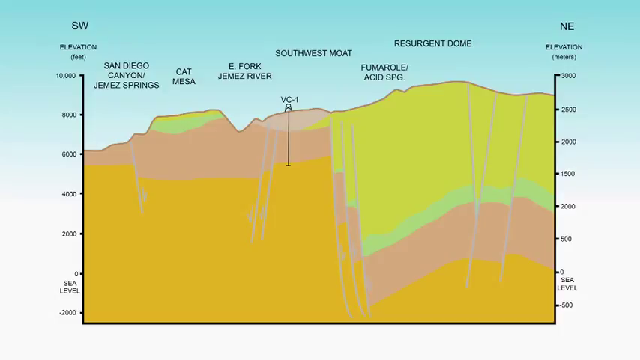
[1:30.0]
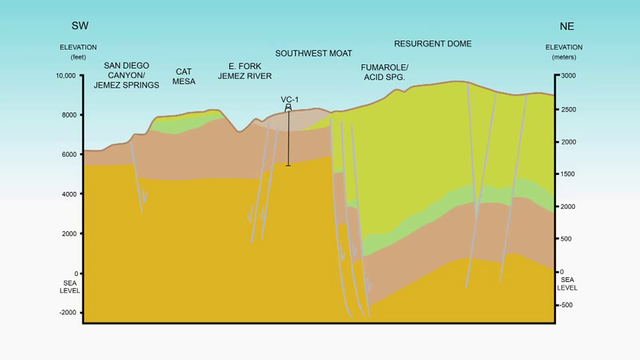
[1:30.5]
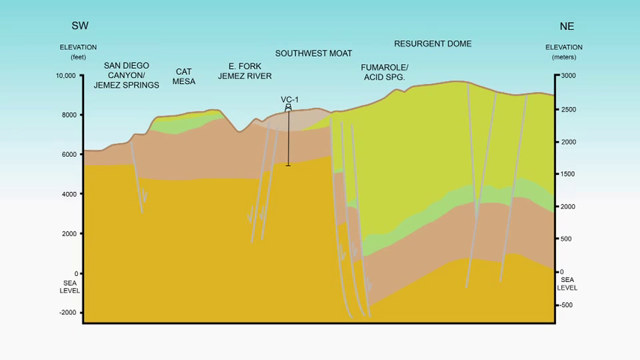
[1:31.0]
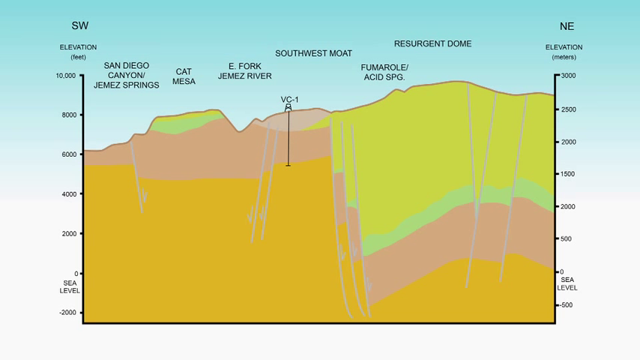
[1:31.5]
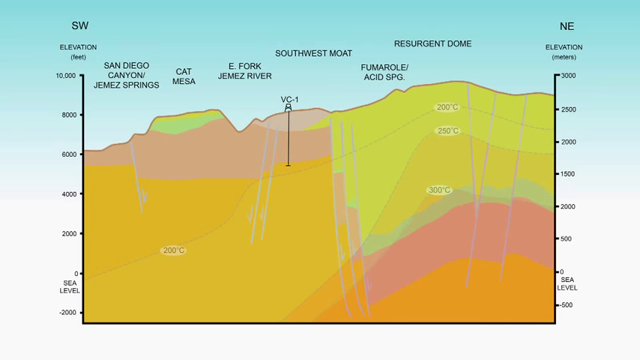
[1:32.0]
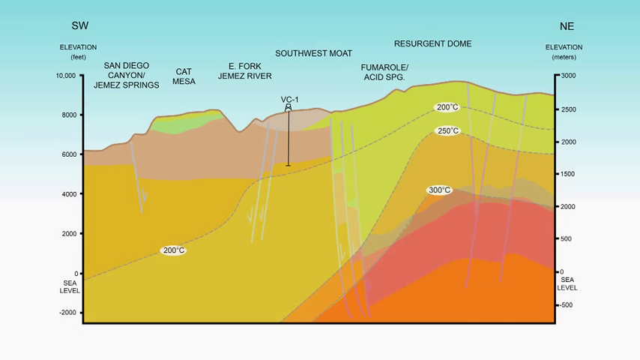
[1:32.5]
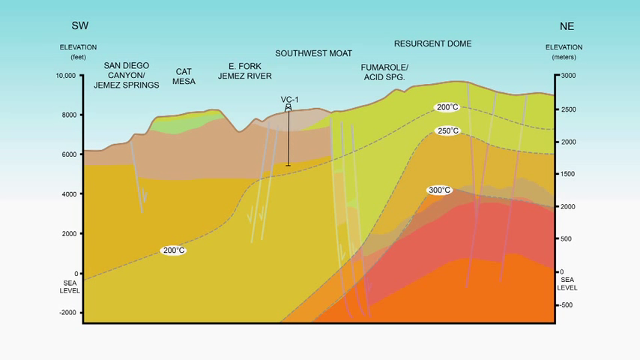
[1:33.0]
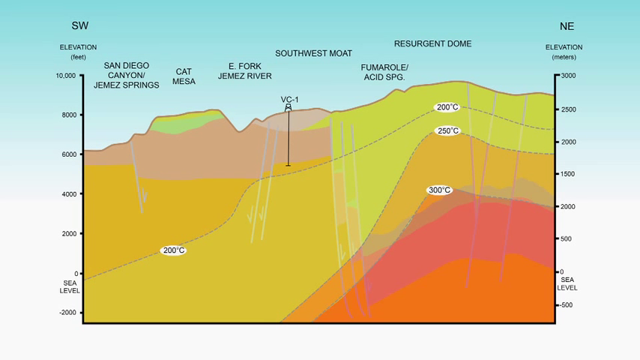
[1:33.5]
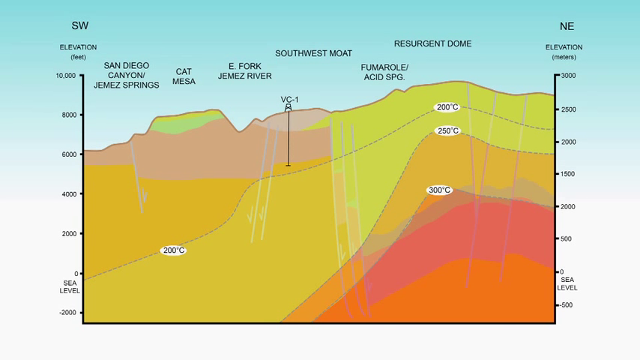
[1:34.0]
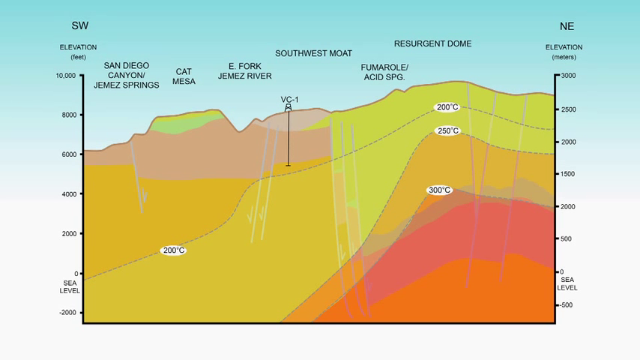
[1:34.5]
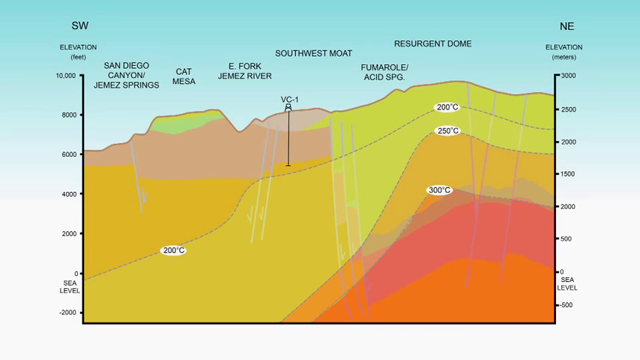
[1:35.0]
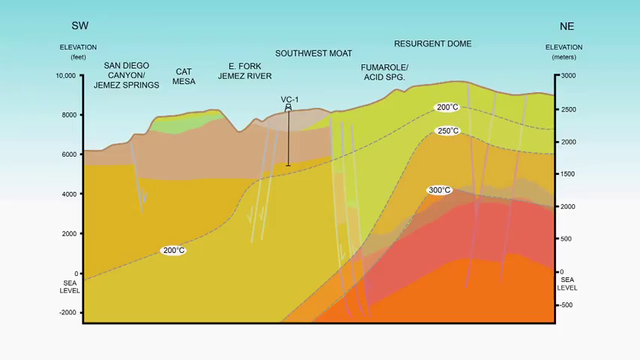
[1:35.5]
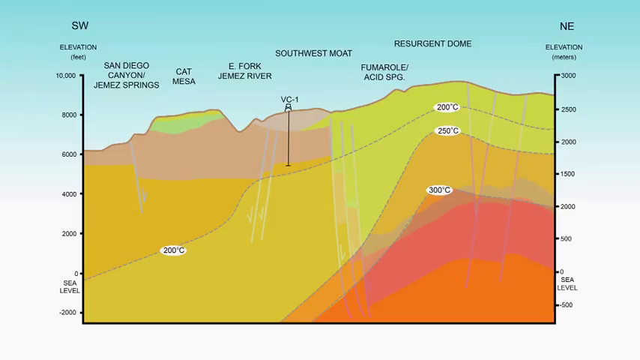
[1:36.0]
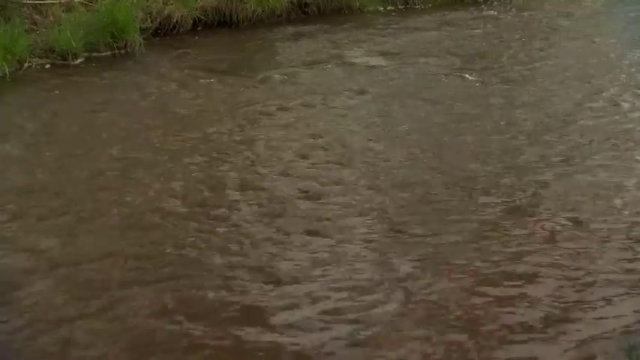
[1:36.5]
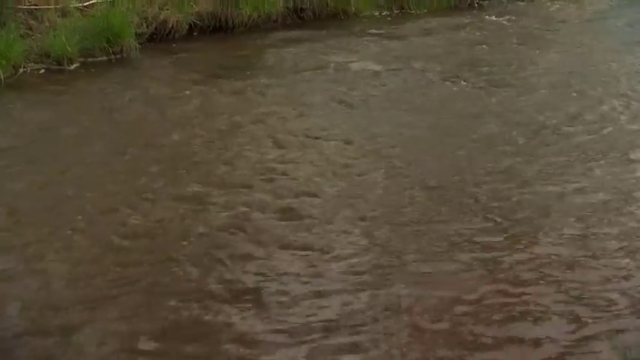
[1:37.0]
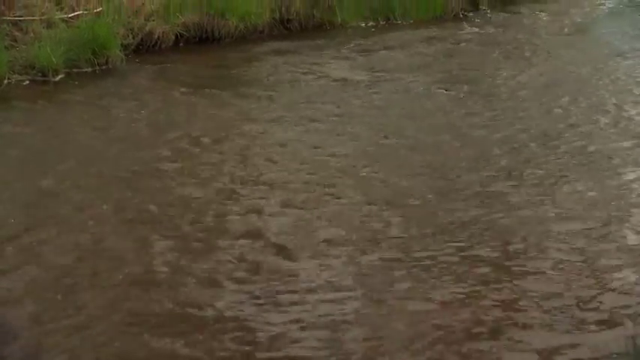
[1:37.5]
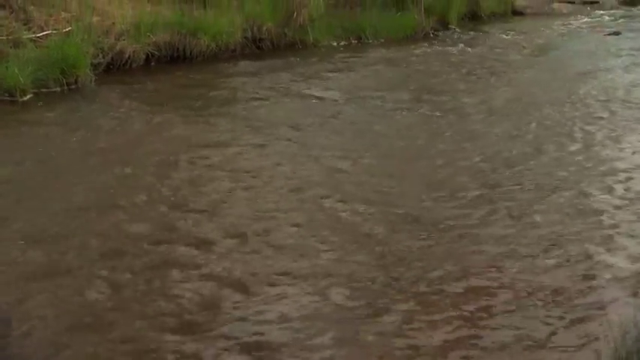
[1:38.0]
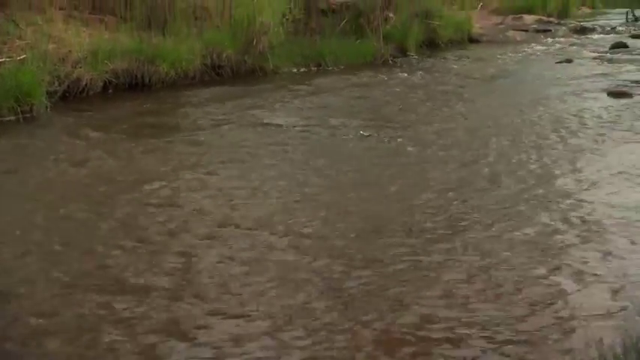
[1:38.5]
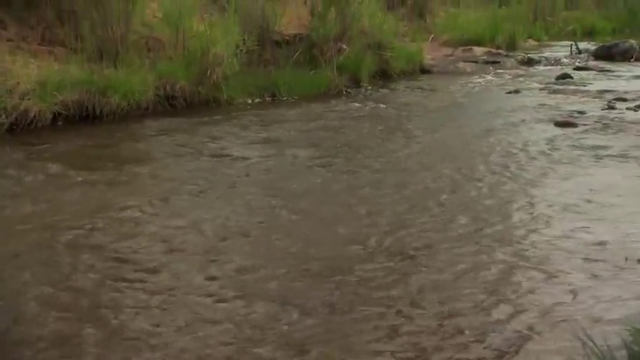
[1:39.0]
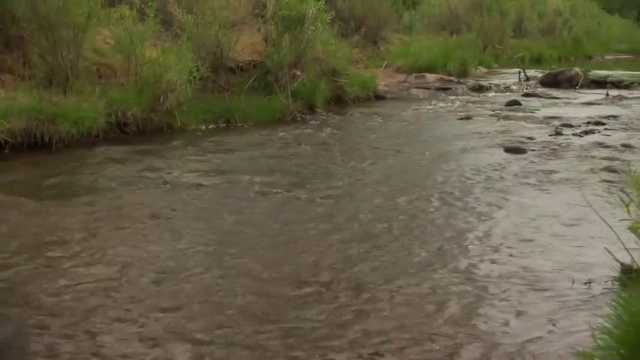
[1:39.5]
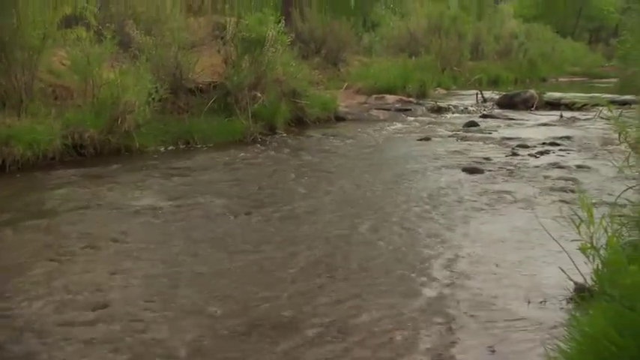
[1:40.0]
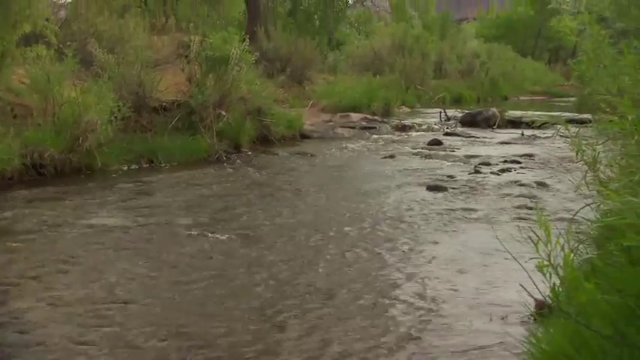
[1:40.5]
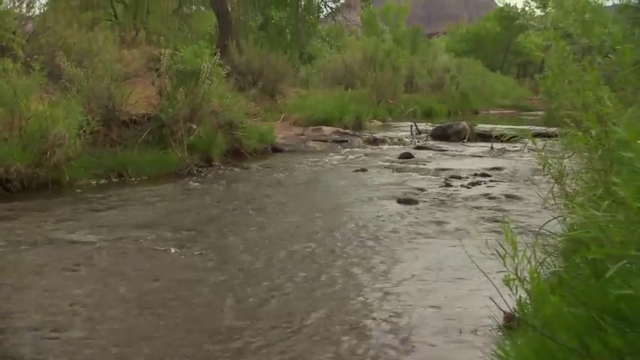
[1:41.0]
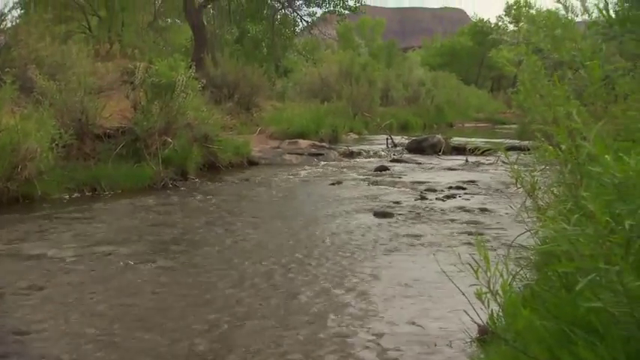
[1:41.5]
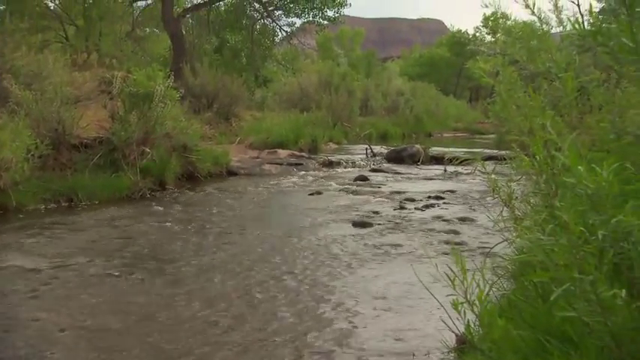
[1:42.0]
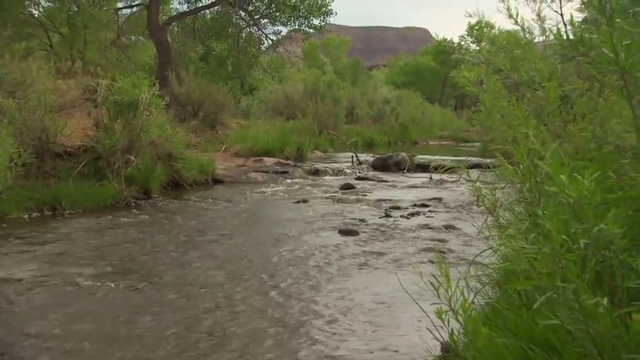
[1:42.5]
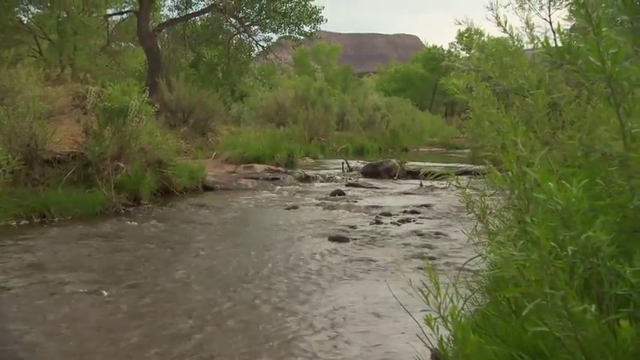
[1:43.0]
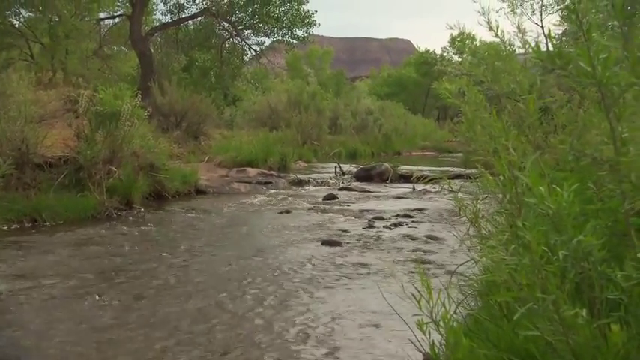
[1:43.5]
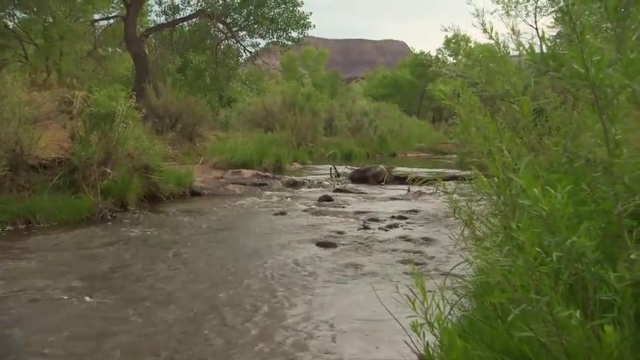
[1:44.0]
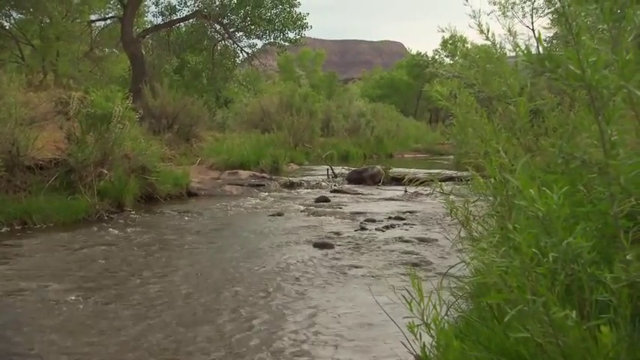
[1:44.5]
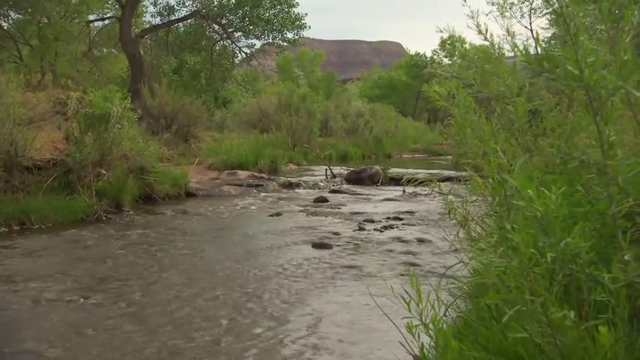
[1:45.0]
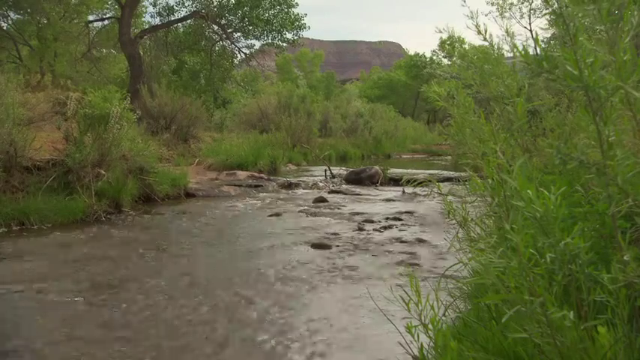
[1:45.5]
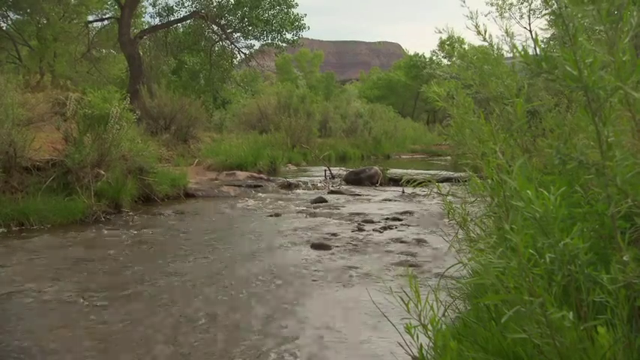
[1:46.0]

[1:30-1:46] What looks to be a hill-like diagram goes through different values relative to sea level, with elevation on the Y axis and values of 0, 2000, 4000, 6000, 8000 and 10,000. Labels along the top include "San Diego Canyon Hamas Springs Cat Mesa", and it also says "Resurgent Dome". The graph shows many different colors that change over time, showing different temperatures, including "300 degrees Celsius". It then cuts to a video of a pond area; the camera pans from left to right, showing the bushes around the pond and the water flowing through. The water ripples, there are rocks in the water, and there is much life all around the body of water.